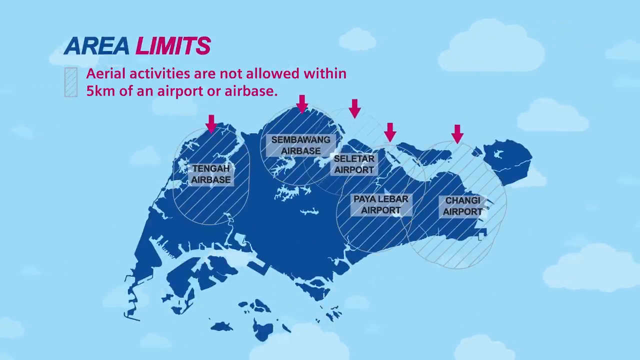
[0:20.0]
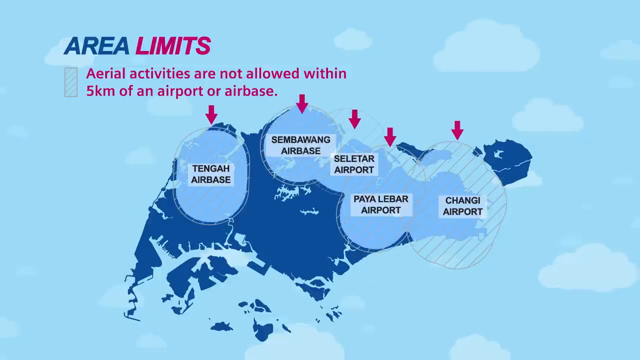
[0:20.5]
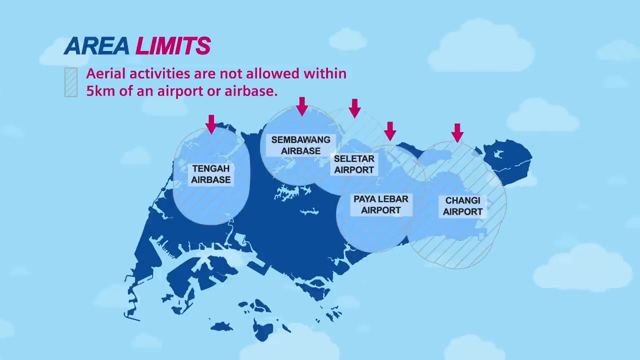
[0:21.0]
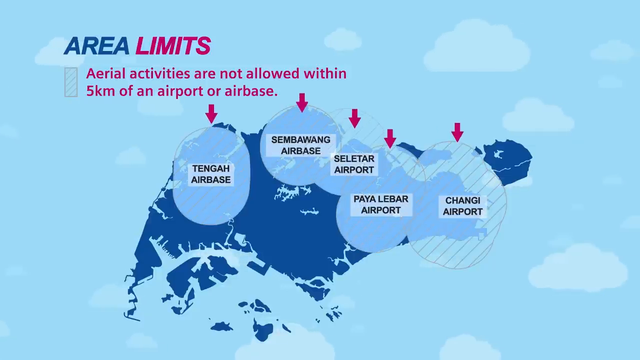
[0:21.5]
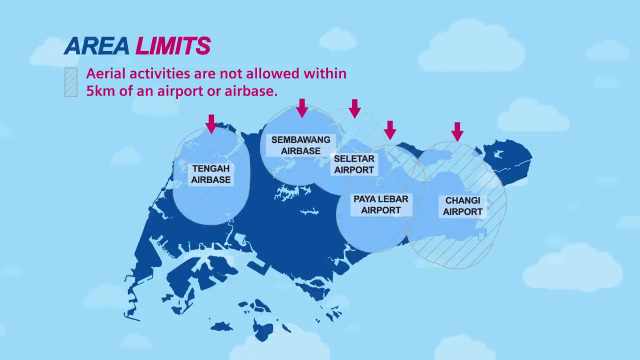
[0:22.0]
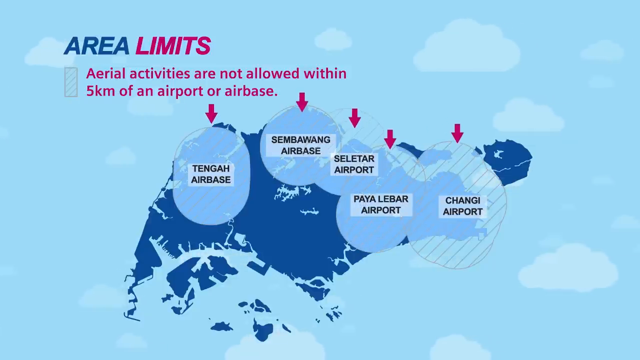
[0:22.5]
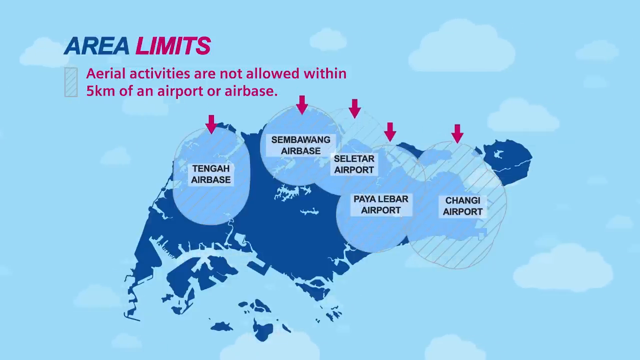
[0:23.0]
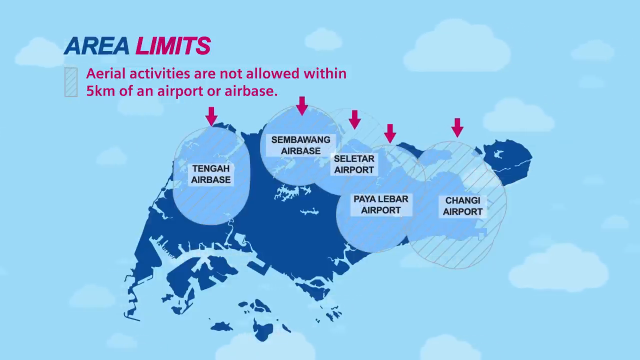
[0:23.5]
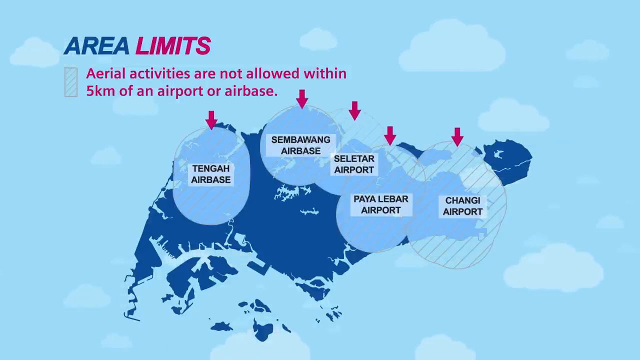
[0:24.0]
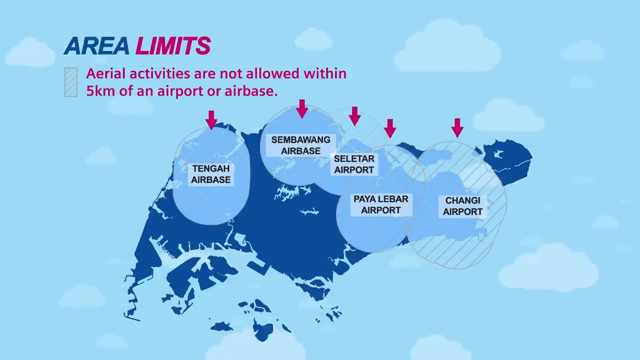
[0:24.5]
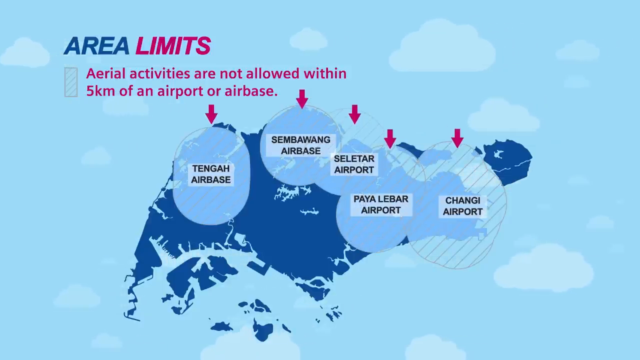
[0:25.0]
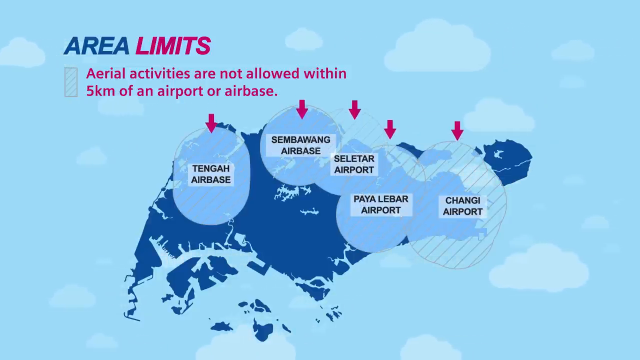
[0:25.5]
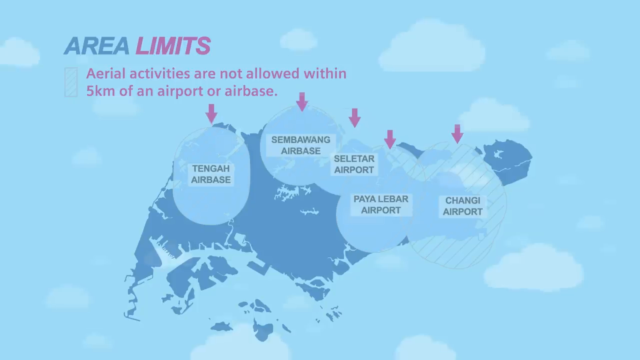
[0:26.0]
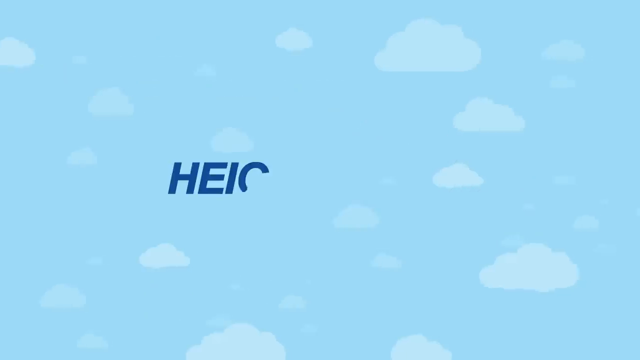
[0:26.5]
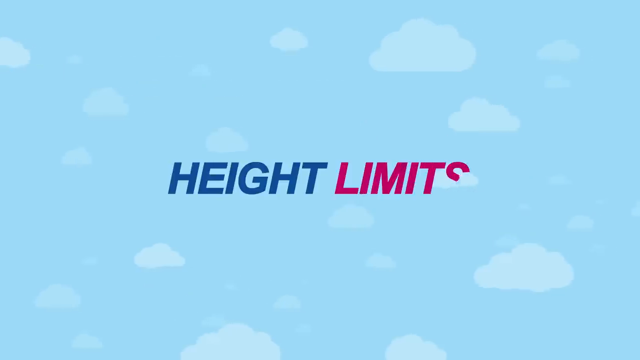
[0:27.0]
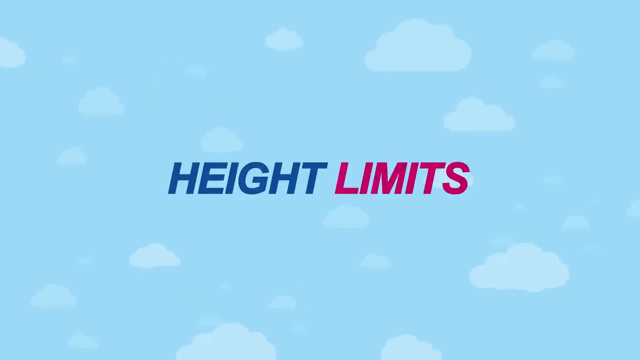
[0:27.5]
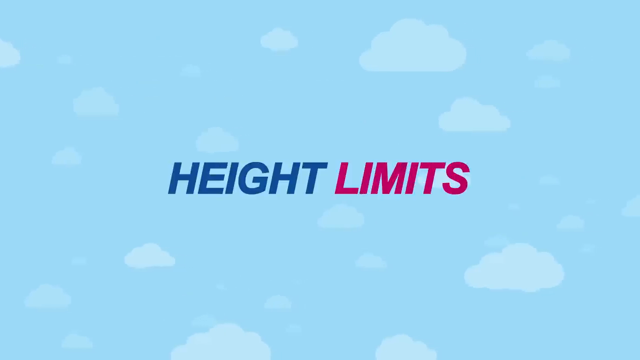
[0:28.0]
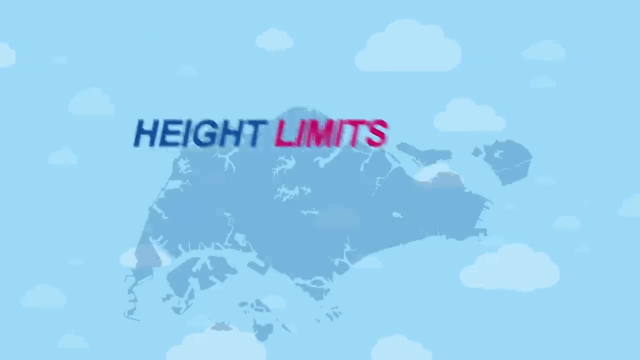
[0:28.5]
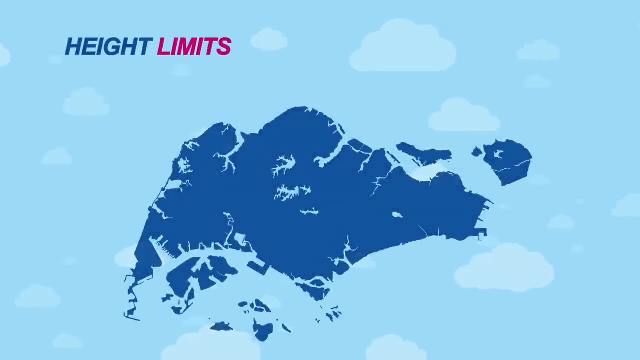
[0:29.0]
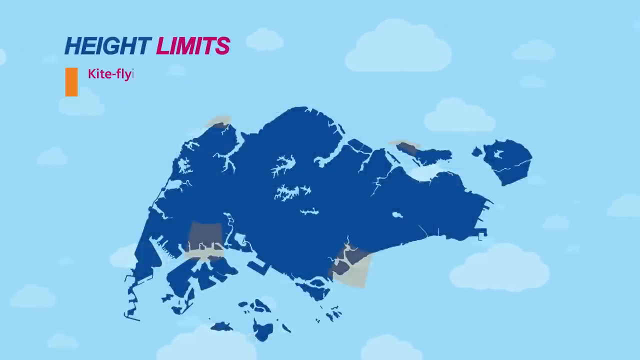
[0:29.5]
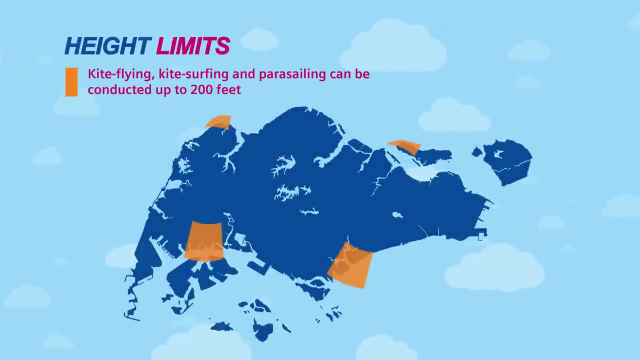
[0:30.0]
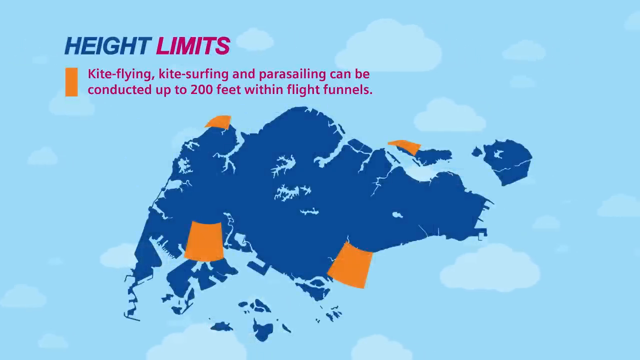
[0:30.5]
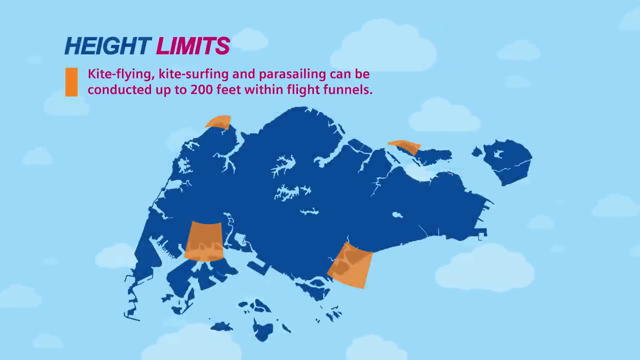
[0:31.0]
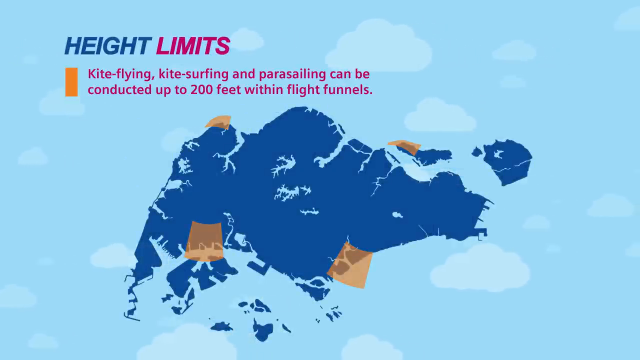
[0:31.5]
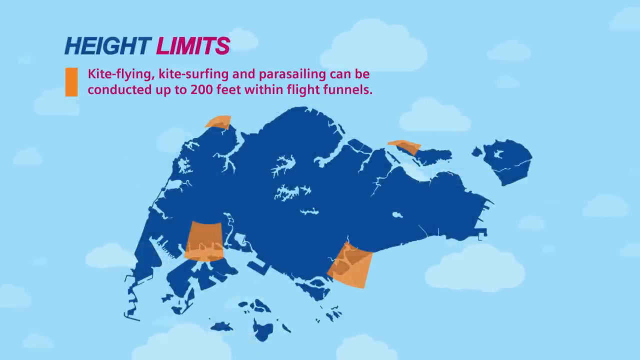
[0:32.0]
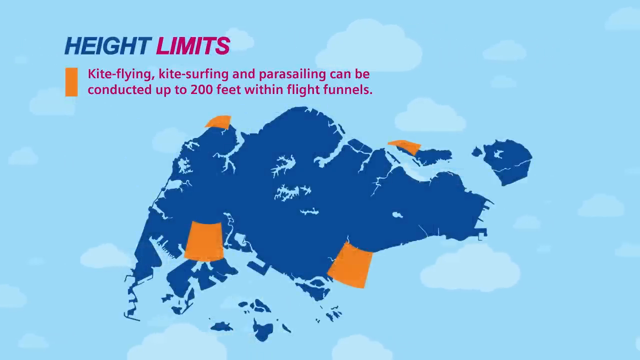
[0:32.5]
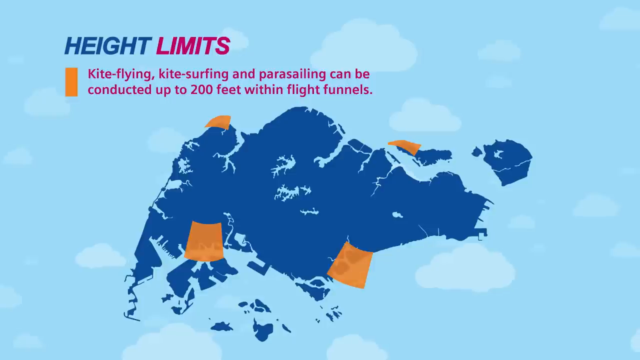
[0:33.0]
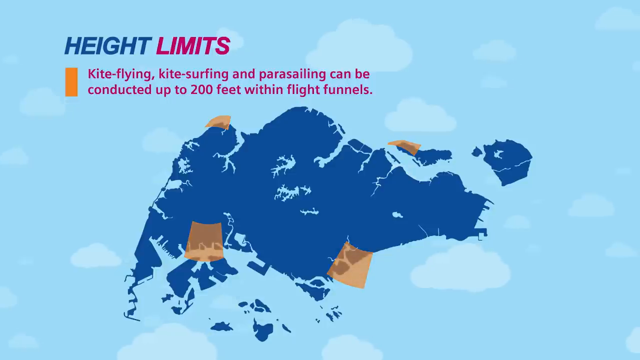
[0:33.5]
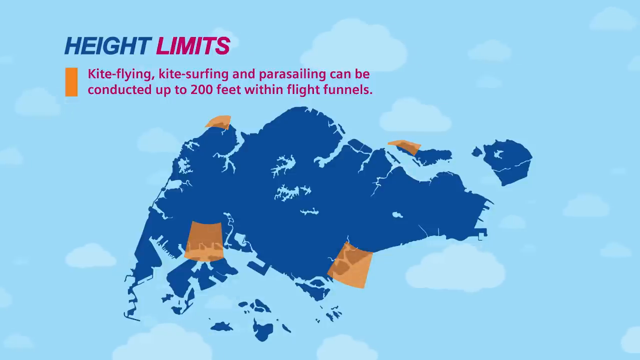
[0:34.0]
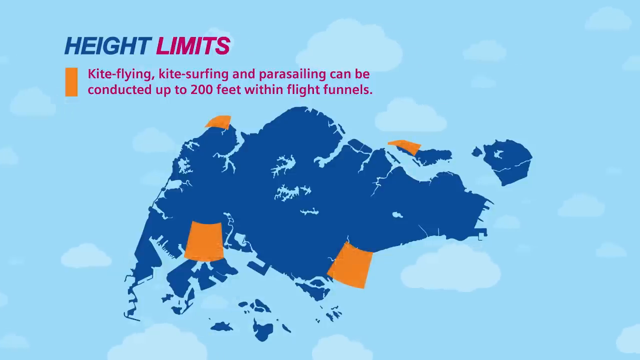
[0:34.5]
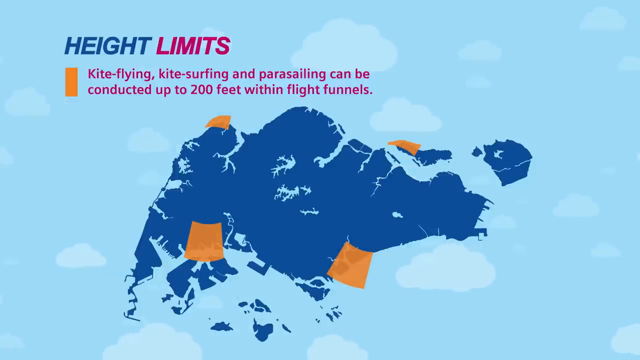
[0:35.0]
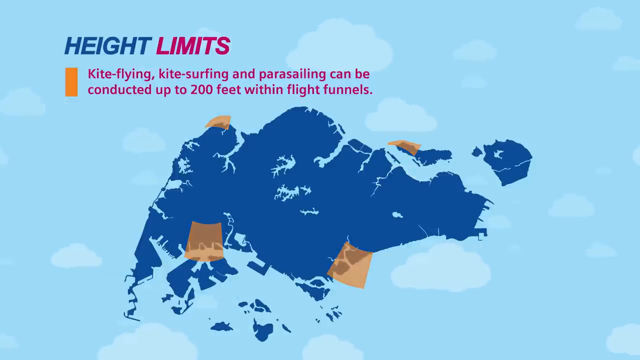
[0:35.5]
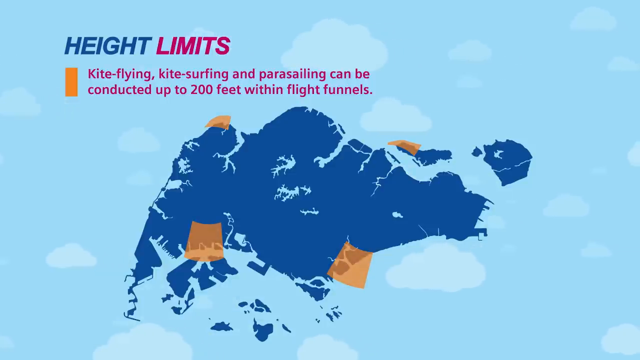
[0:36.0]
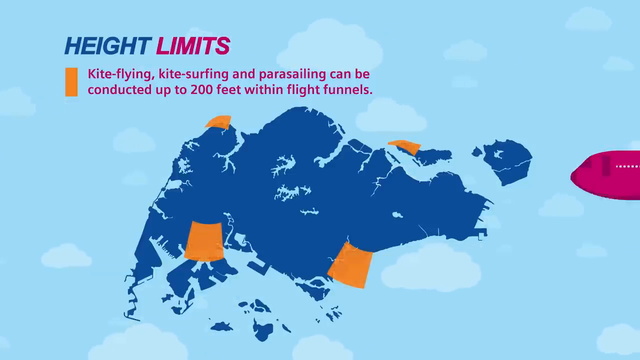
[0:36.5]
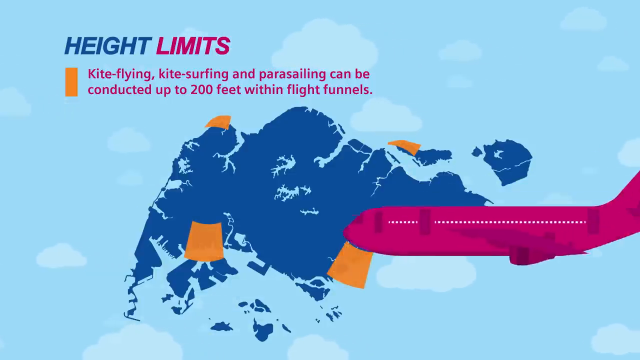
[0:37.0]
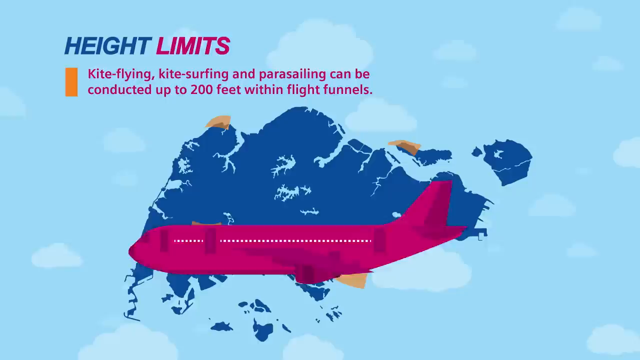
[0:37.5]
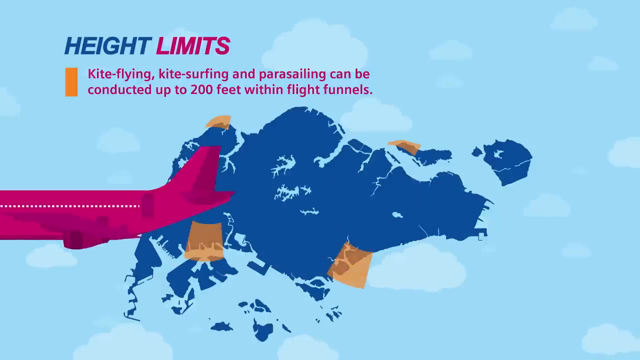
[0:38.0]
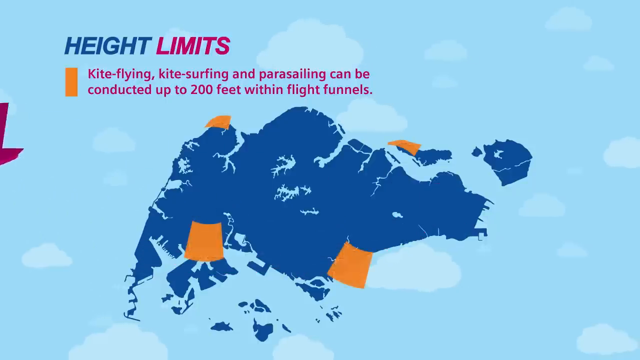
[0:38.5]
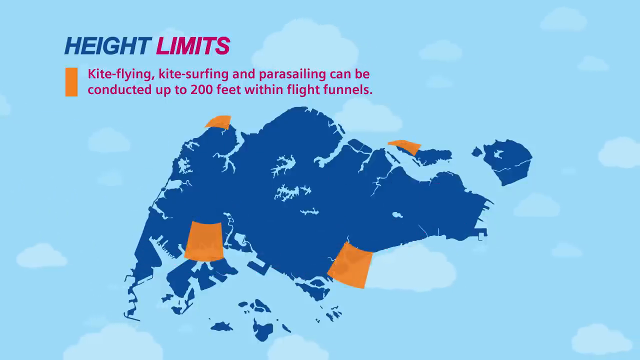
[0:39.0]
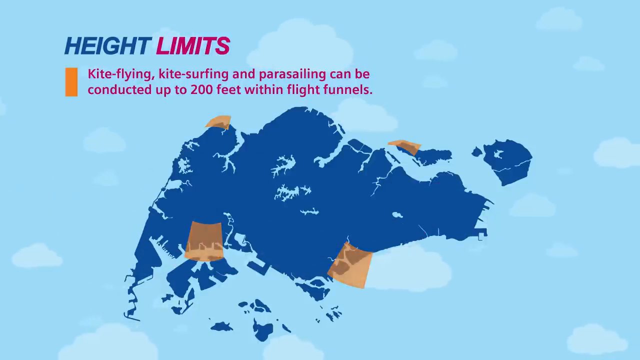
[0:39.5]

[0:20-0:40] The area limits are shown on a map: aerial activities are not allowed within five kilometers of an airport or airbase, and pink arrows point out where these area limits are. The places marked are the Tenga Airbase, the Semsewami Airbase, the Salater Airport, the Pelelebar Airport and the Changi Airport, two airbases and three airports. Another map shows the height limits, stating that kite flying, kite surfing and parasailing can be conducted up to 200 feet within flight funnels. This map is blue, with some spots on it in yellow, and a pink airplane flies right over those spots.